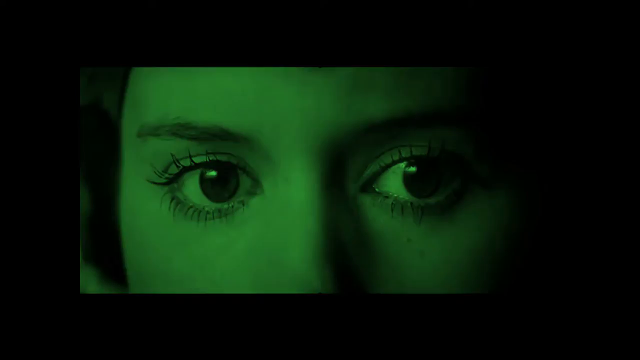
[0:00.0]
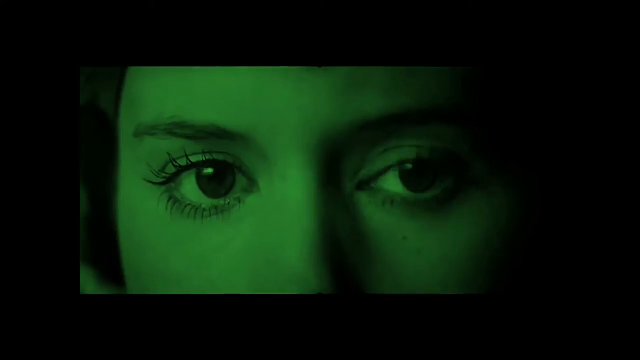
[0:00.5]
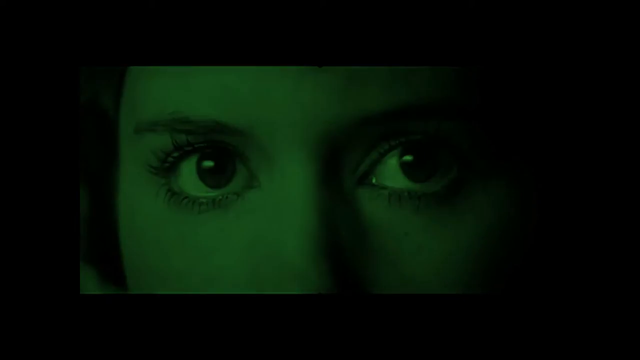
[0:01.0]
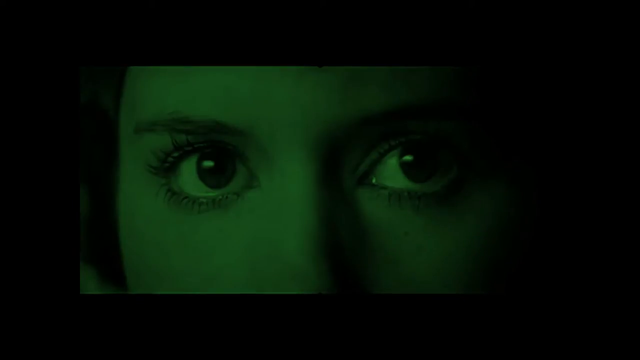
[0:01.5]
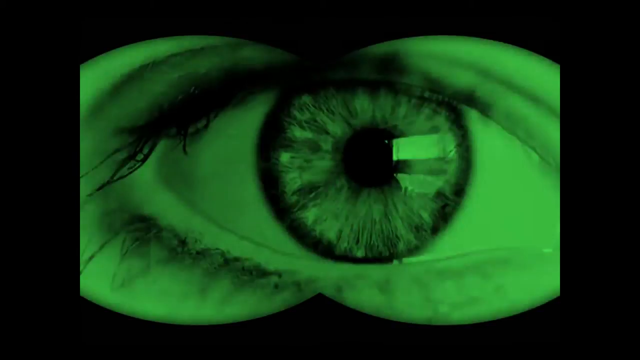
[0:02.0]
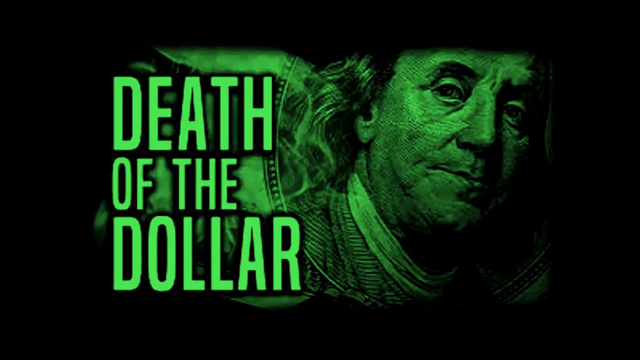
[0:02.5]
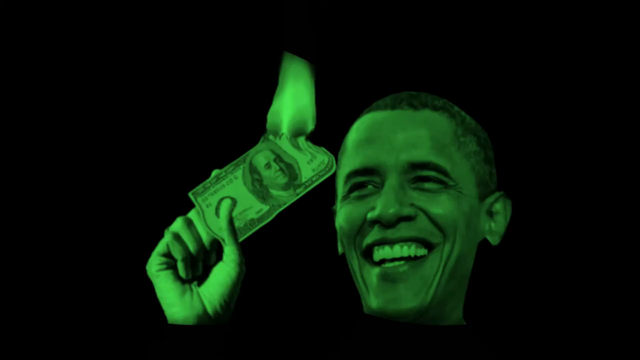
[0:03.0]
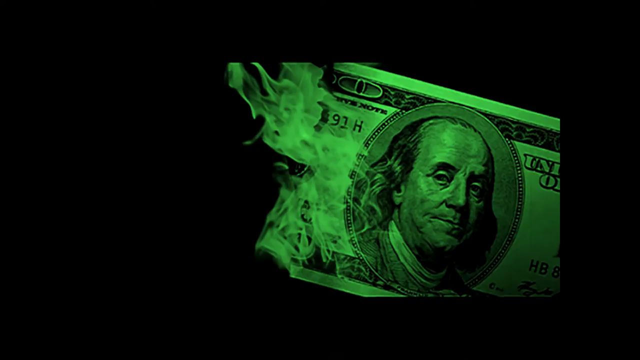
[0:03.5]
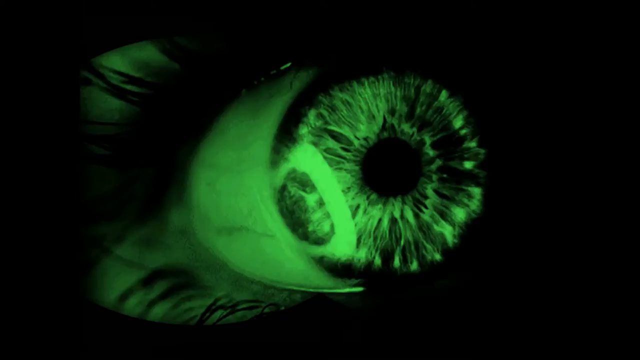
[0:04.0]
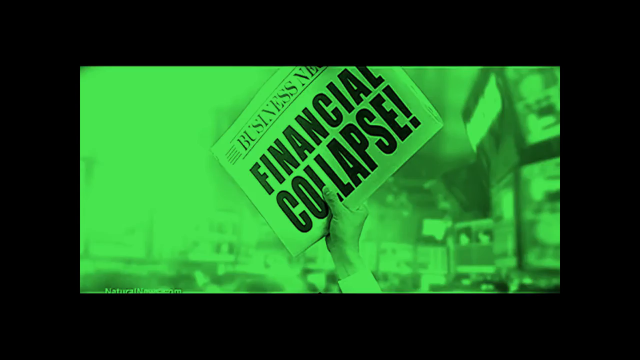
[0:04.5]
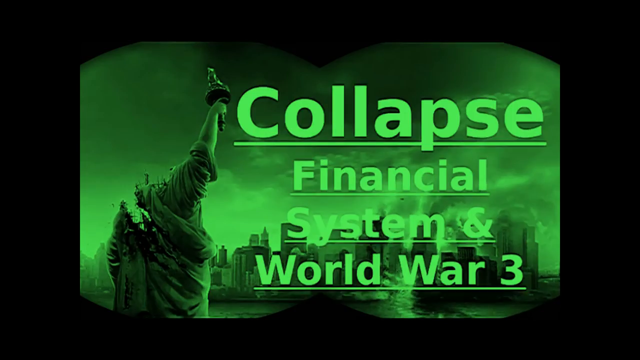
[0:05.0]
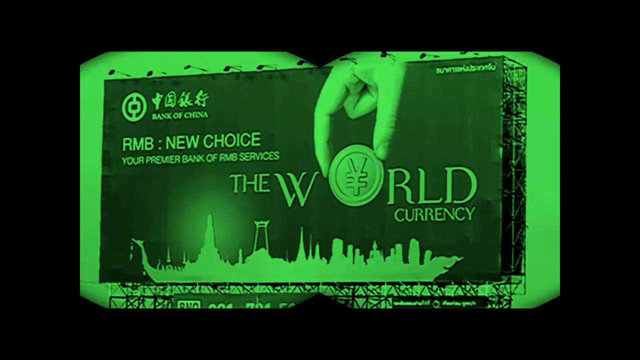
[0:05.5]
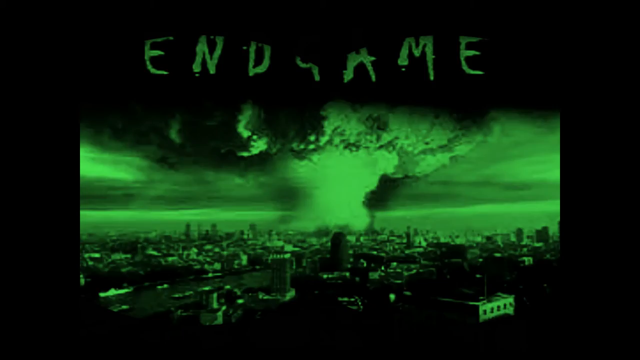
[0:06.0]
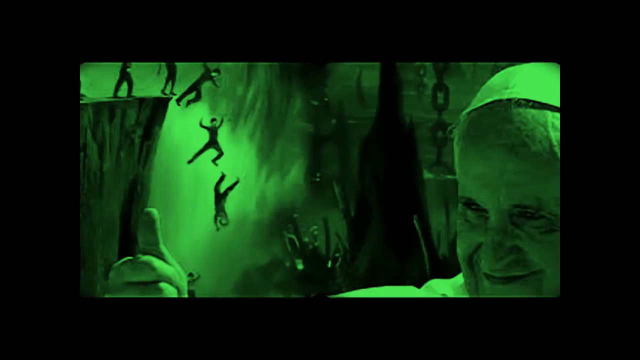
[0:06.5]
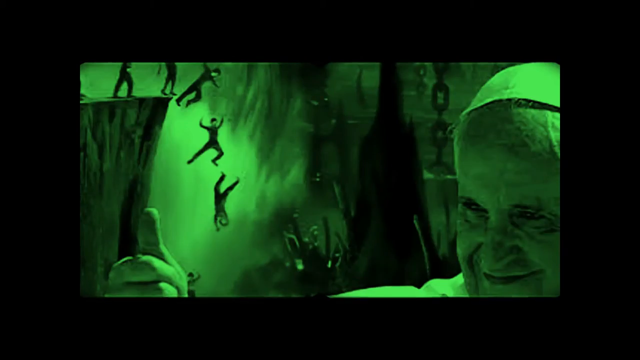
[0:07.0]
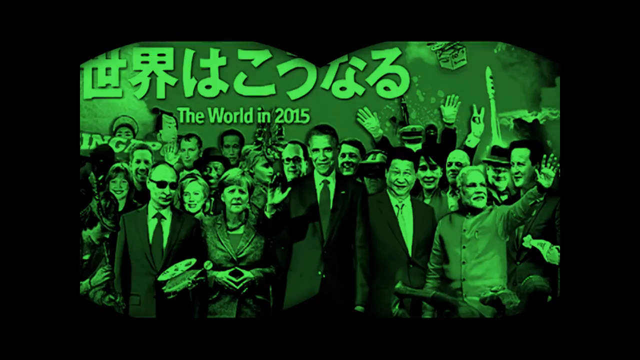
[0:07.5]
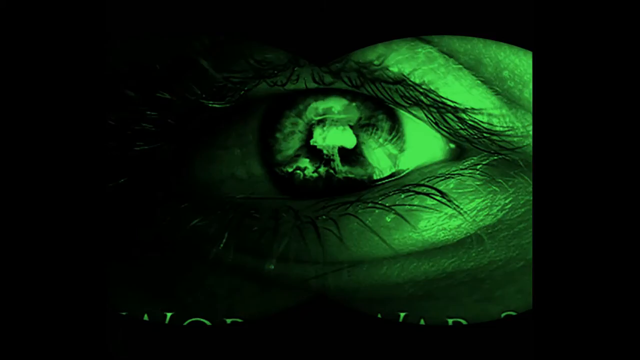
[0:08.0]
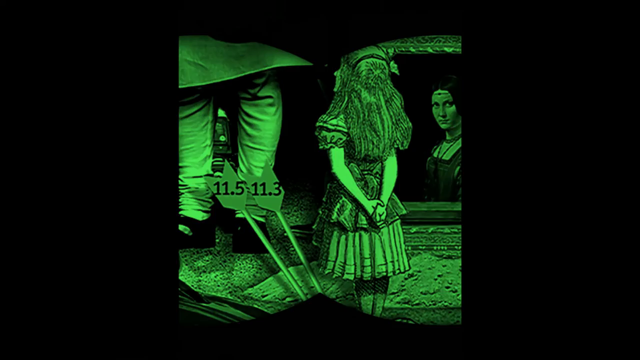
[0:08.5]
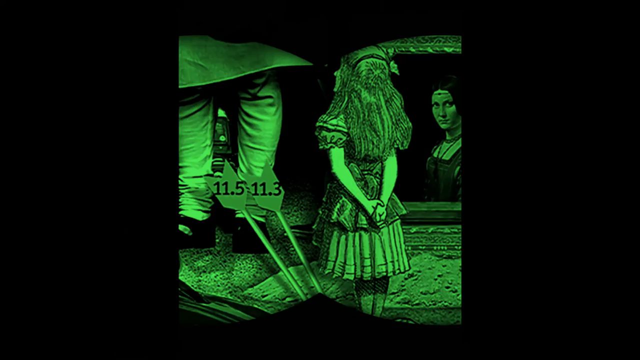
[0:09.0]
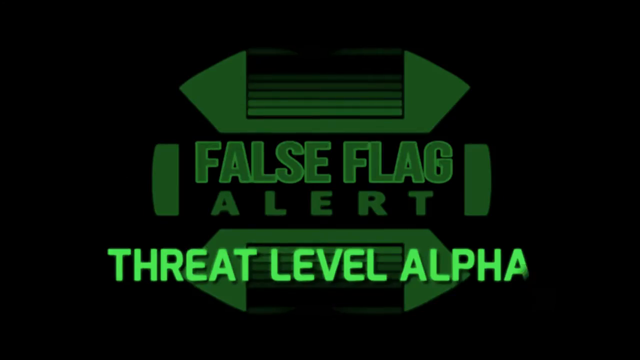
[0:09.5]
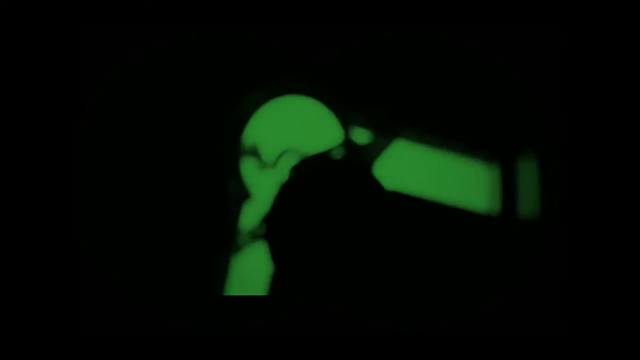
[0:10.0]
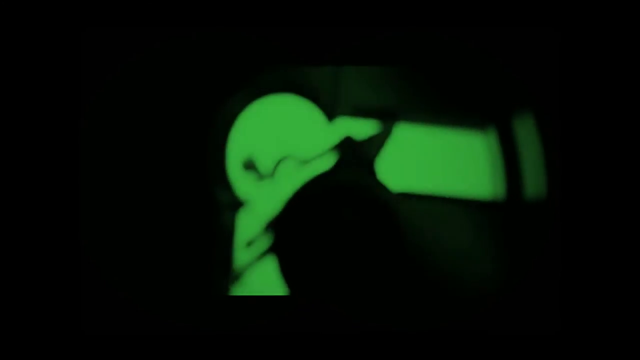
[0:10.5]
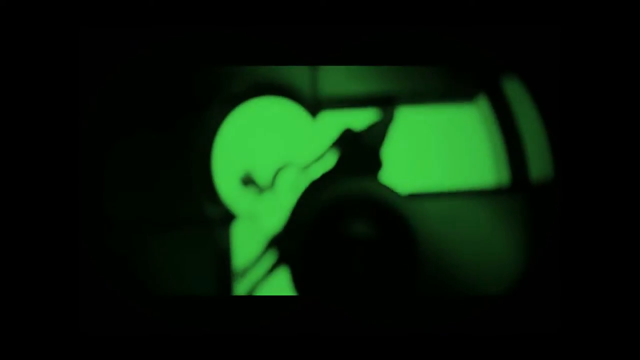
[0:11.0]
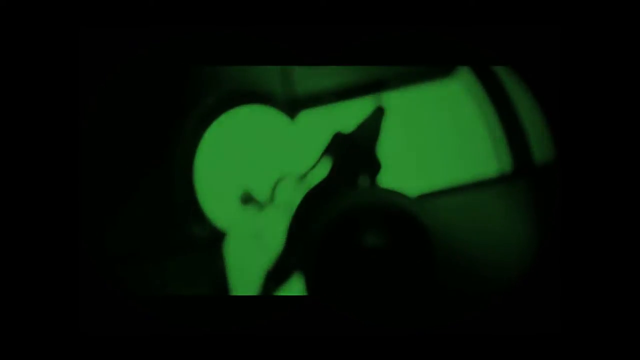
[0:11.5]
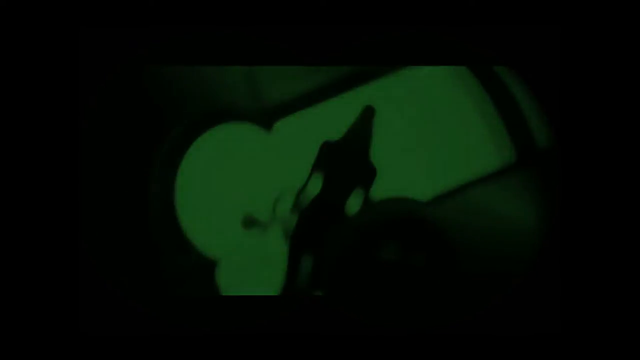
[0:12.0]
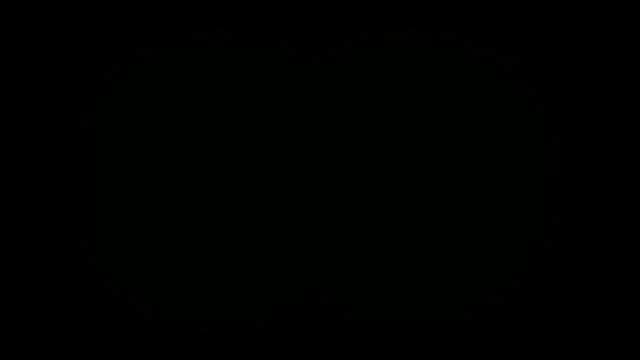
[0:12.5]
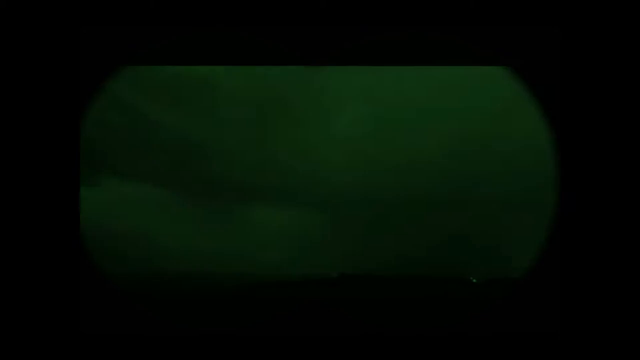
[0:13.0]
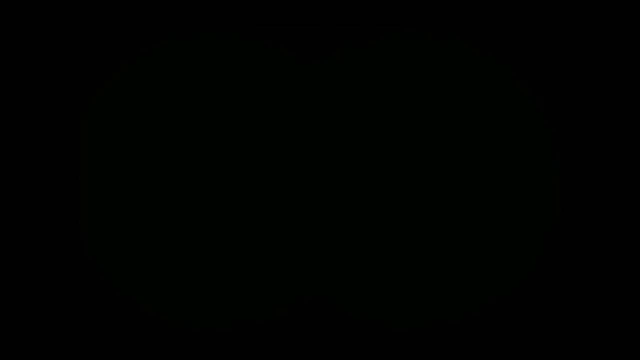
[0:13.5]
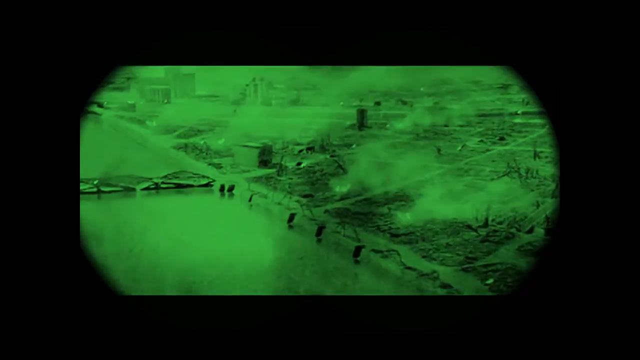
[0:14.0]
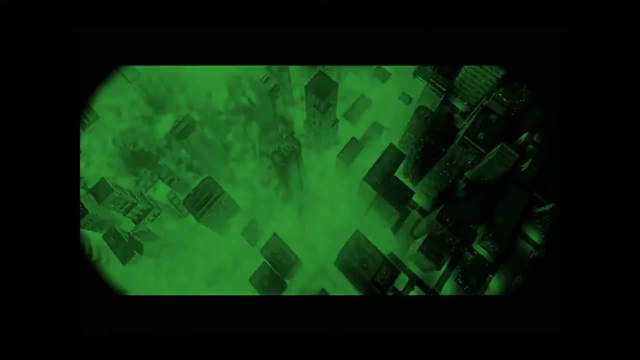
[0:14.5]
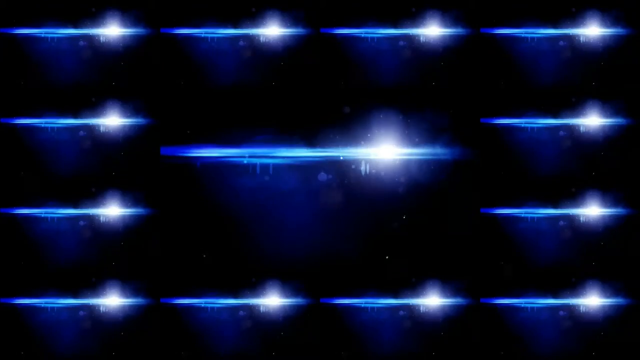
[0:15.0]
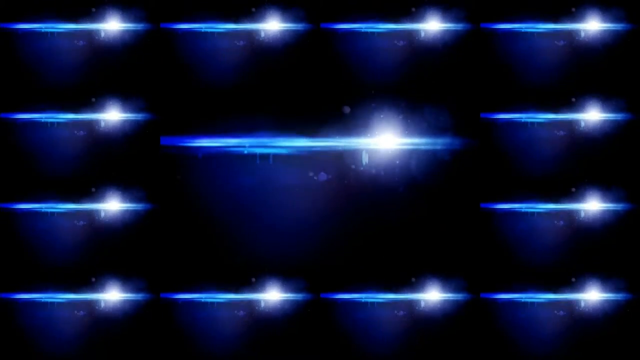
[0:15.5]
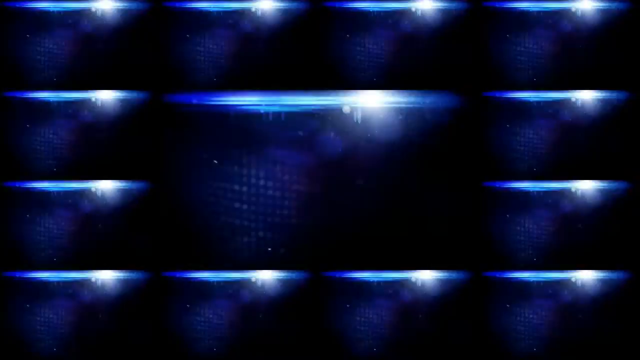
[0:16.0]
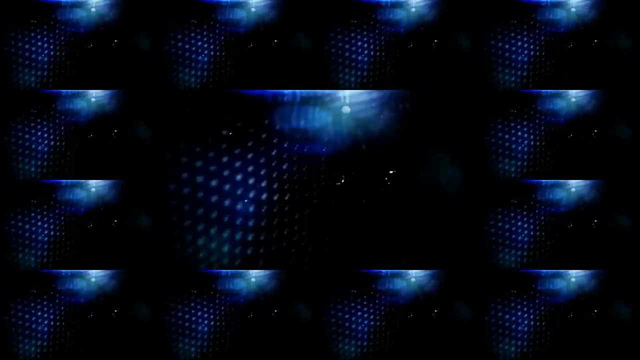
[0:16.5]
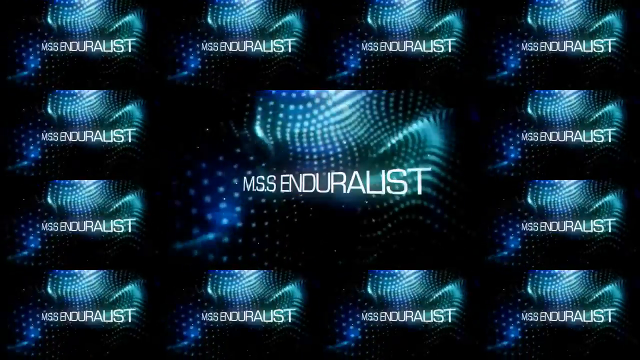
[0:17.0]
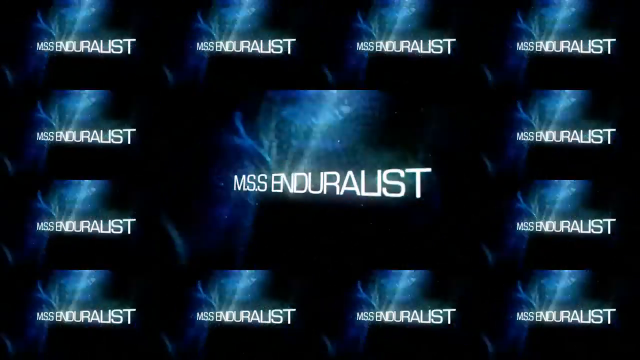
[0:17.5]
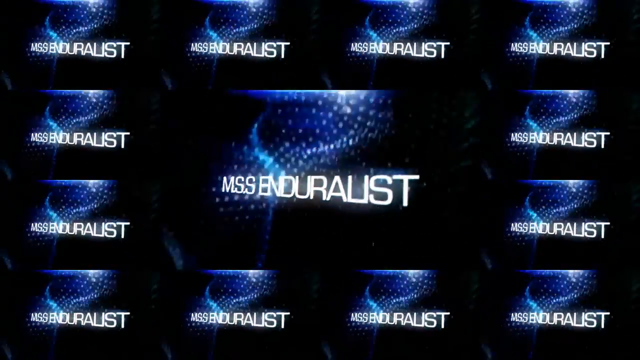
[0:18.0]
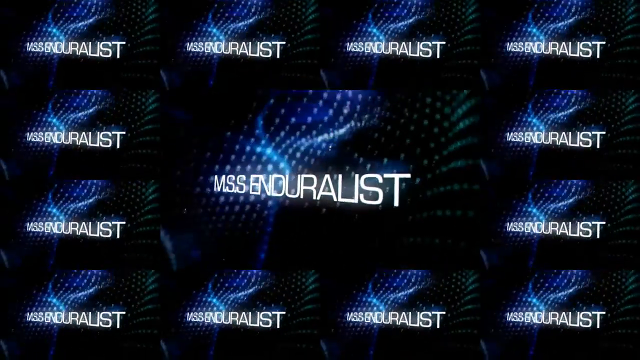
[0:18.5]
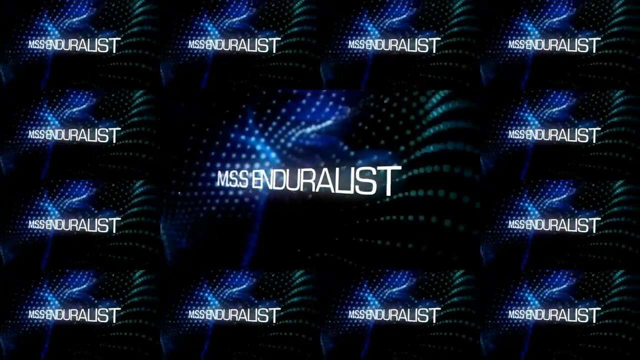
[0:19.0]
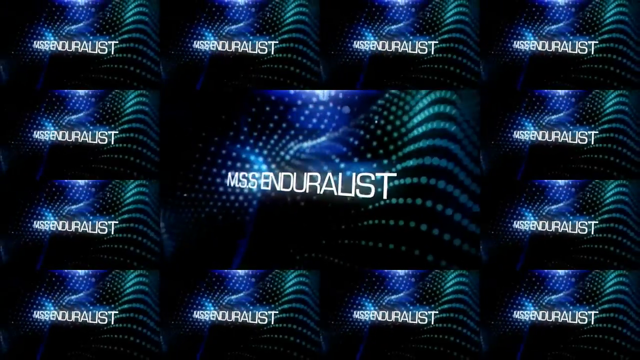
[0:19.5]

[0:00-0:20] The video opens with a close-up of a woman's eyes in a green-tinted photograph, followed by a series of images of eyes and then a series of images of headlines, all tinted green. One reads "Death of the dollar," with an image of Benjamin Franklin from a $100 bill behind it. A $100 bill is shown on fire. A photo shows someone holding a newspaper with the headline "Financial collapse." A photo of a severely damaged Statue of Liberty with its head missing appears, with the text "Collapse, financial system and World War III" to the right of it. A photograph of a city with a mushroom cloud above it follows, with the word "Endgame" at the top of the screen. Another photo shows all the world leaders at the time in 2015. Finally, the introduction for the video, called MSS Enduralist, appears.